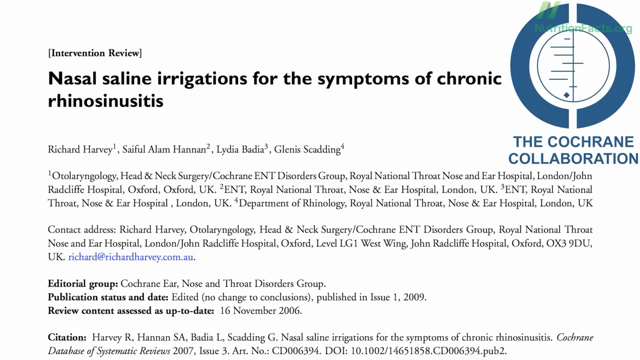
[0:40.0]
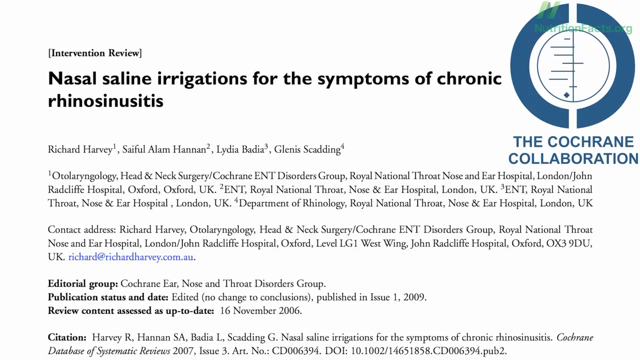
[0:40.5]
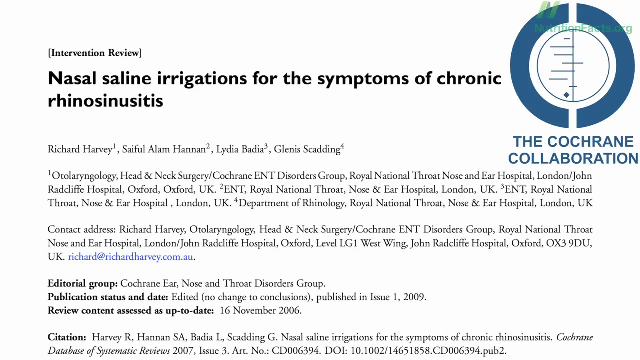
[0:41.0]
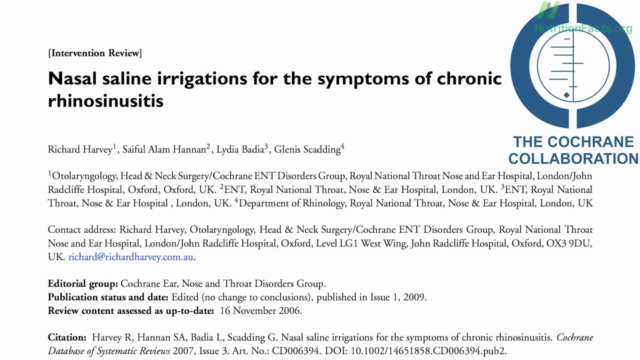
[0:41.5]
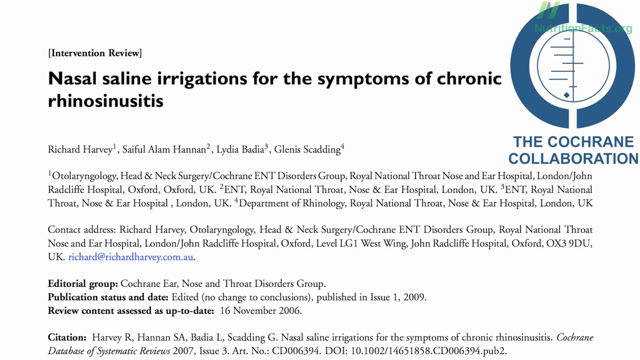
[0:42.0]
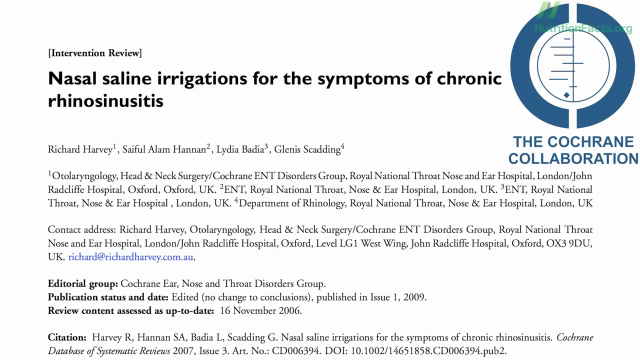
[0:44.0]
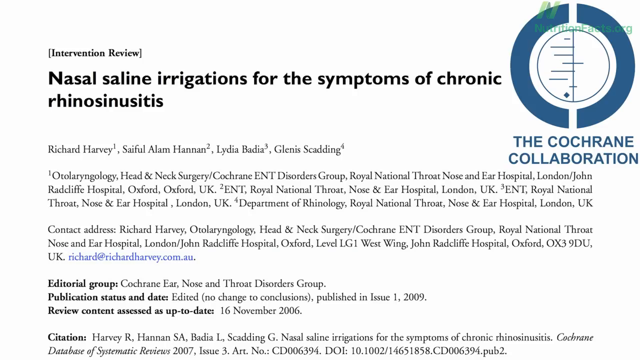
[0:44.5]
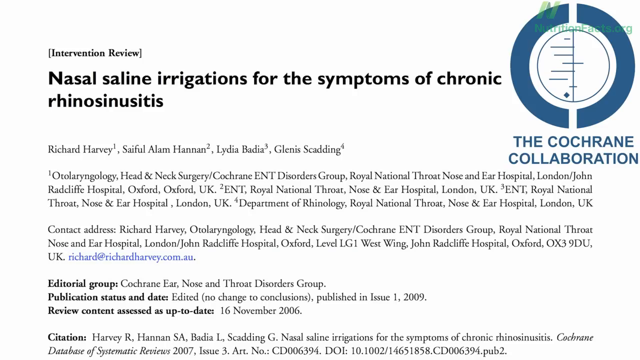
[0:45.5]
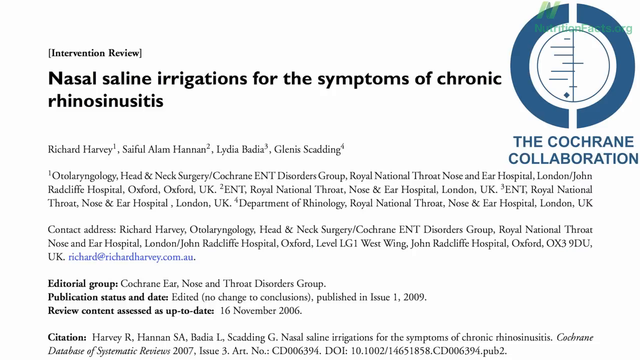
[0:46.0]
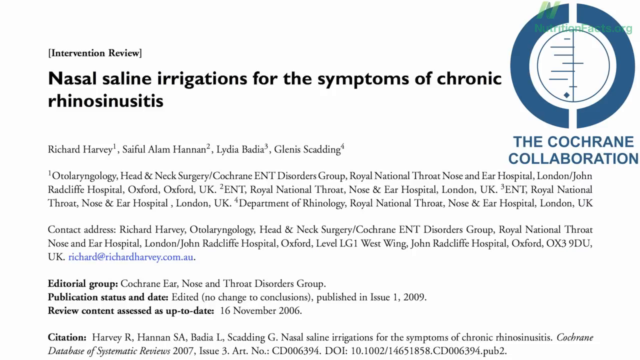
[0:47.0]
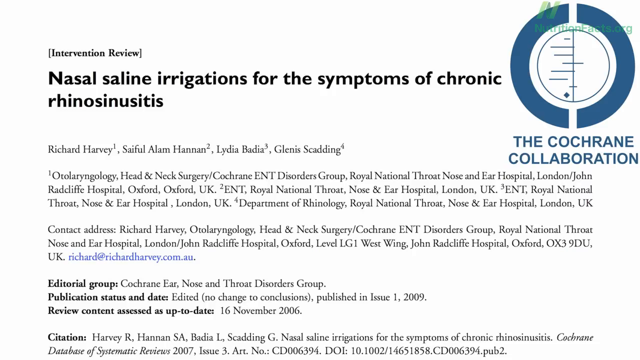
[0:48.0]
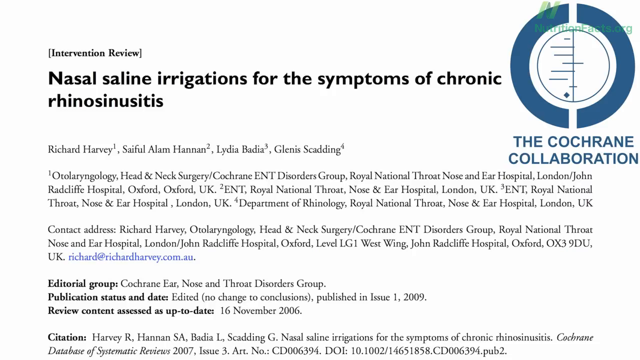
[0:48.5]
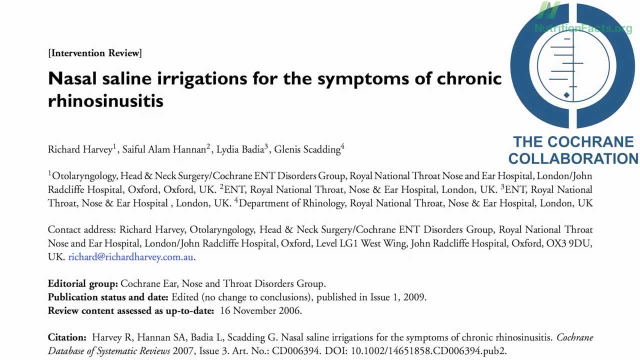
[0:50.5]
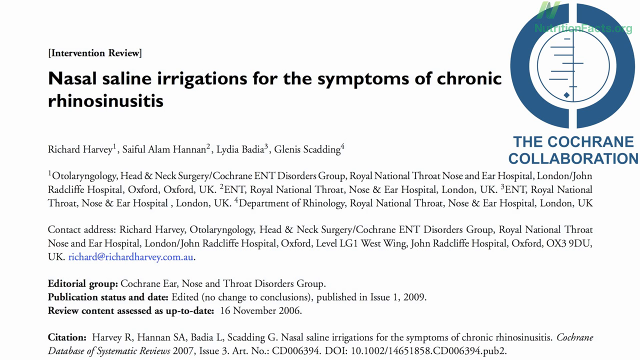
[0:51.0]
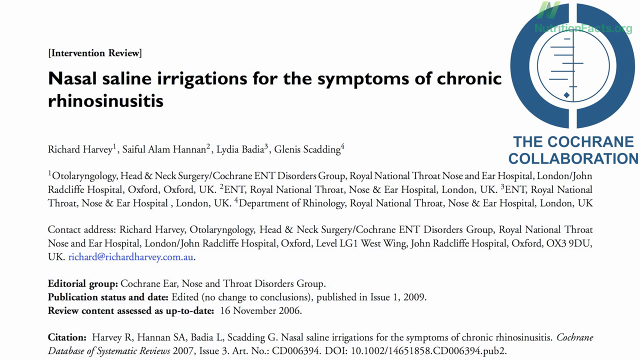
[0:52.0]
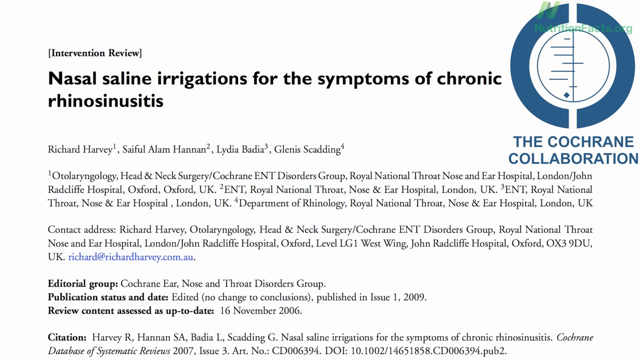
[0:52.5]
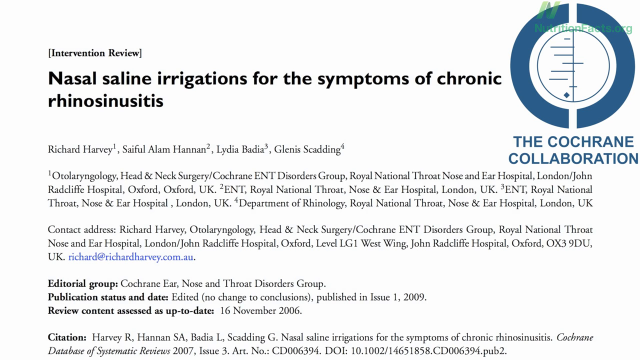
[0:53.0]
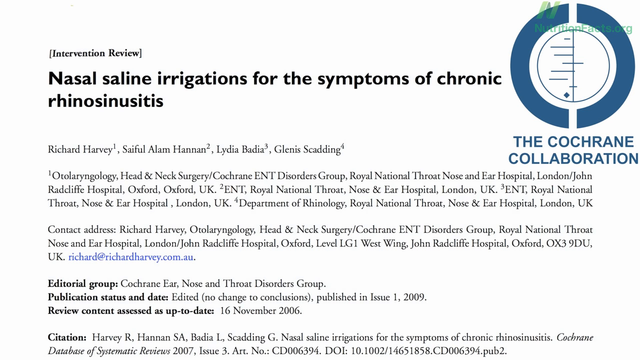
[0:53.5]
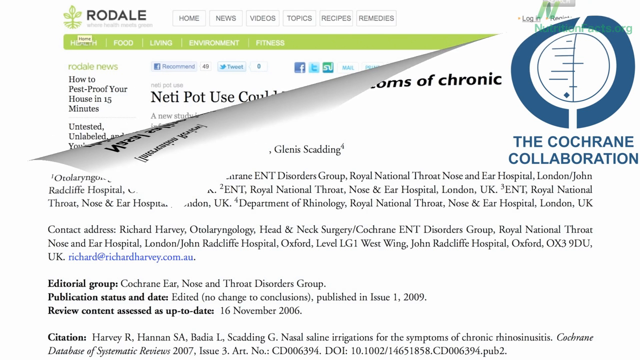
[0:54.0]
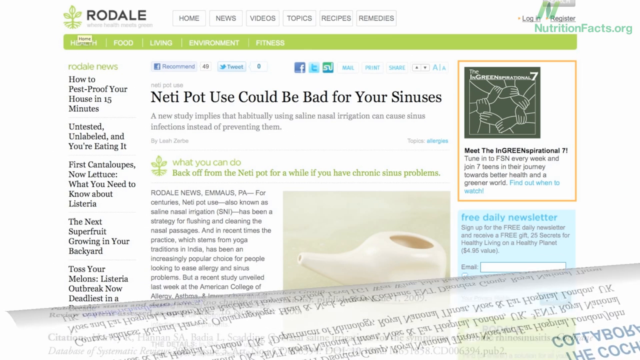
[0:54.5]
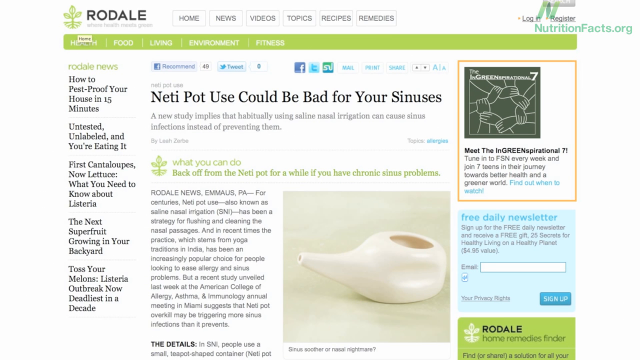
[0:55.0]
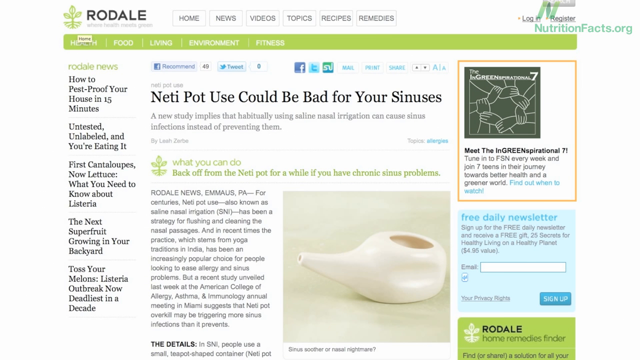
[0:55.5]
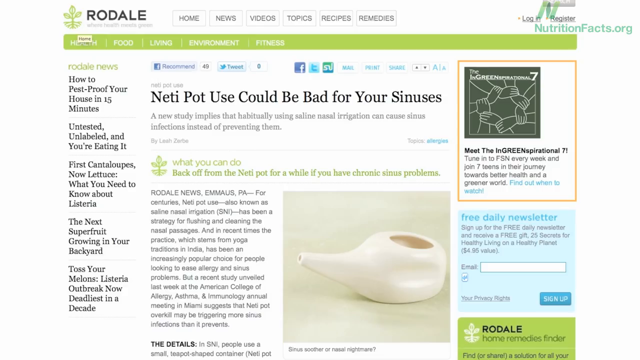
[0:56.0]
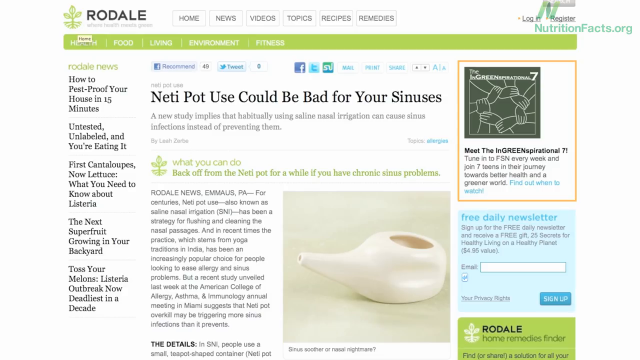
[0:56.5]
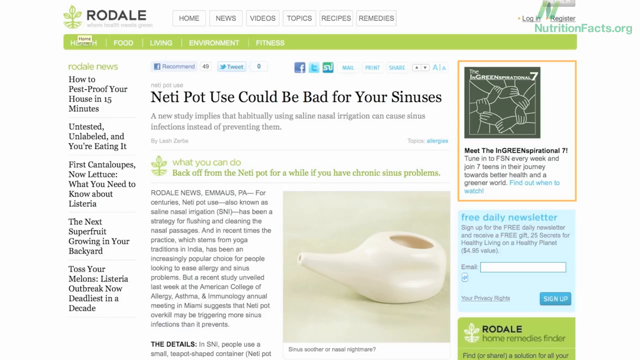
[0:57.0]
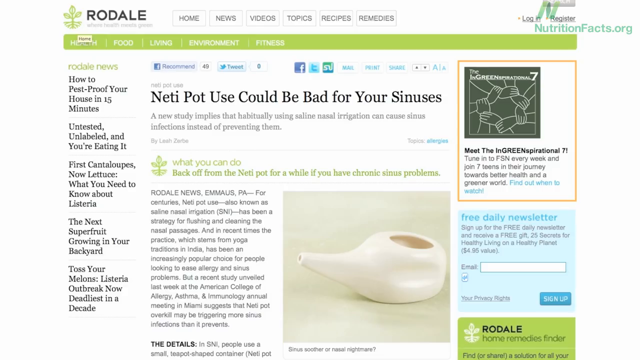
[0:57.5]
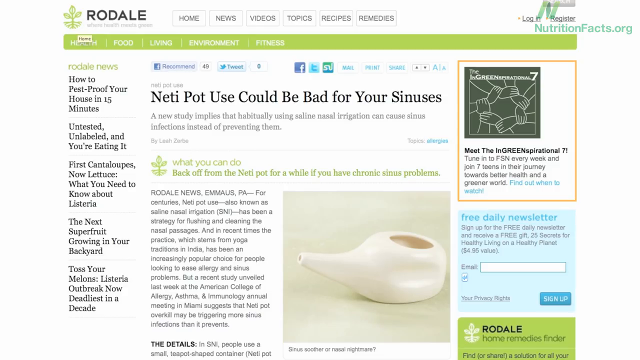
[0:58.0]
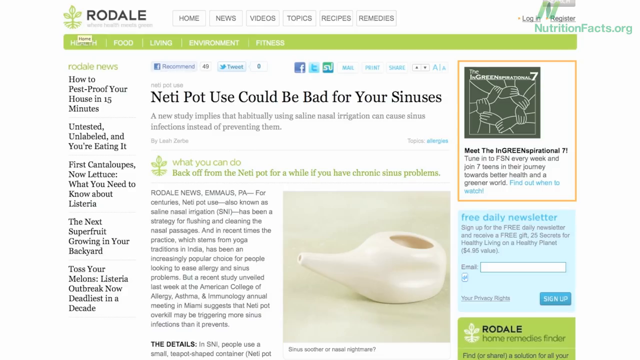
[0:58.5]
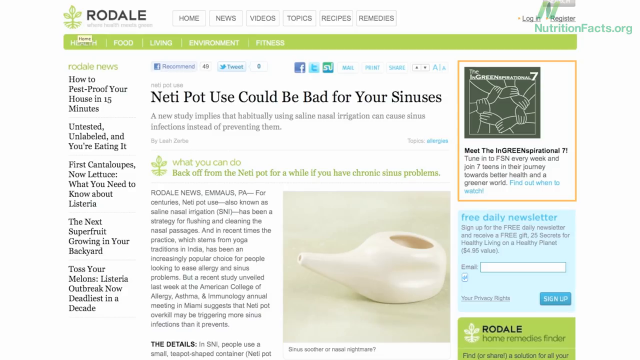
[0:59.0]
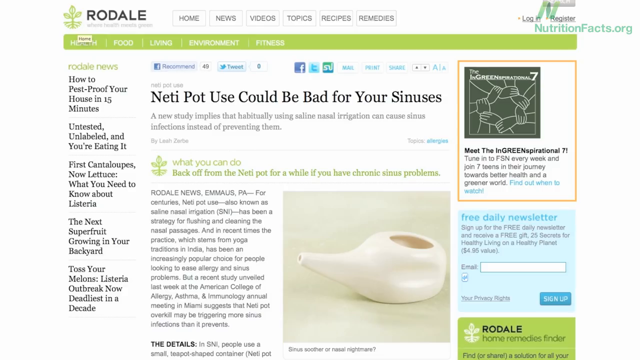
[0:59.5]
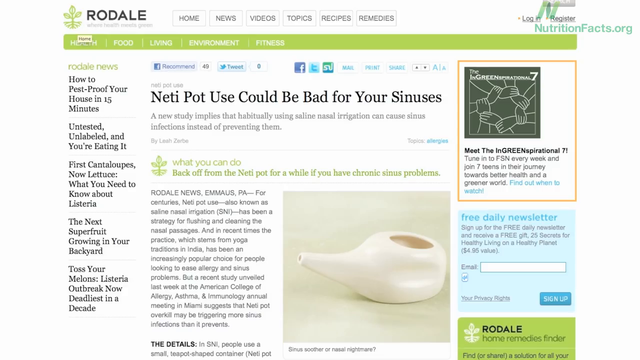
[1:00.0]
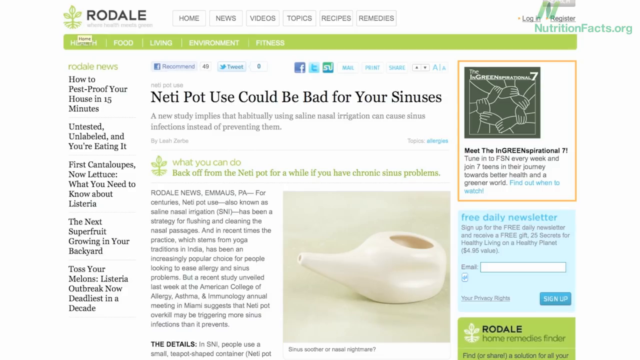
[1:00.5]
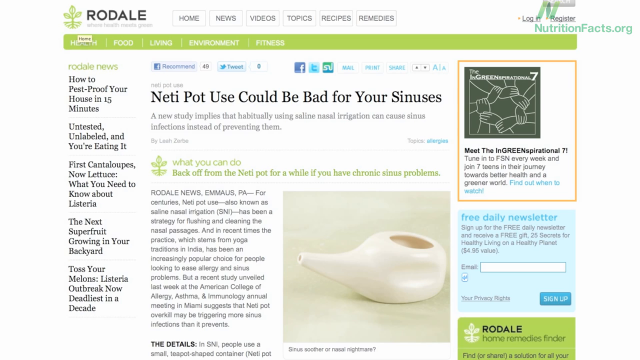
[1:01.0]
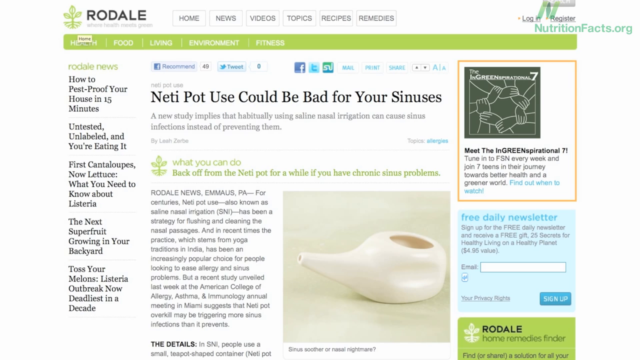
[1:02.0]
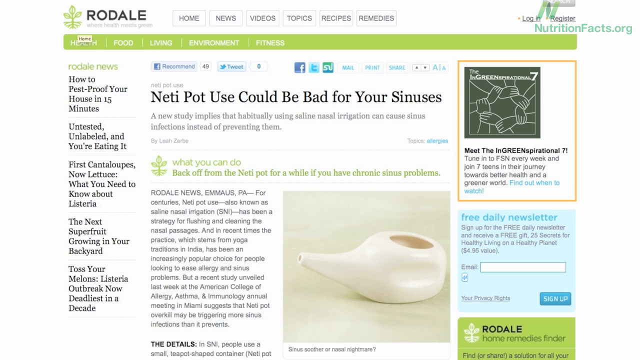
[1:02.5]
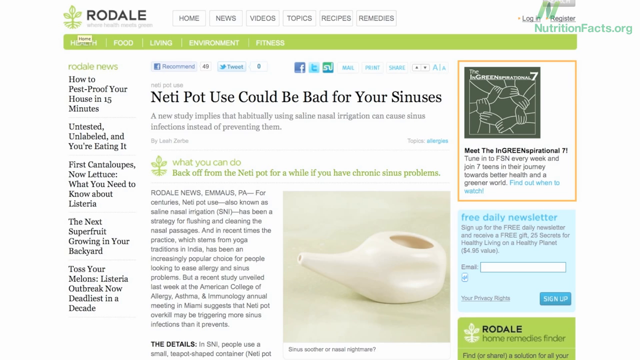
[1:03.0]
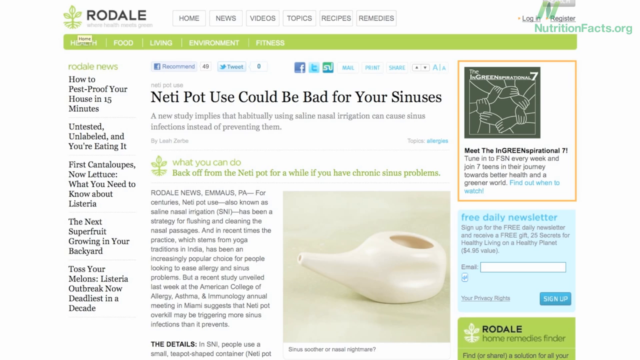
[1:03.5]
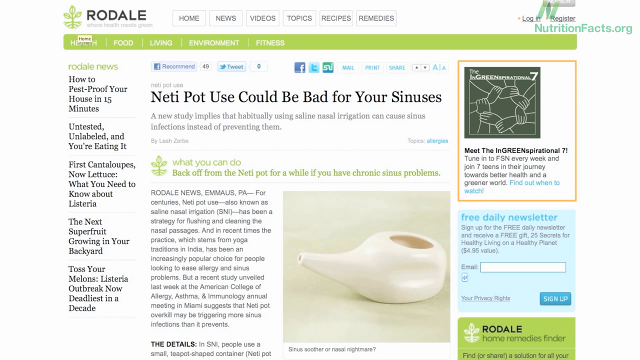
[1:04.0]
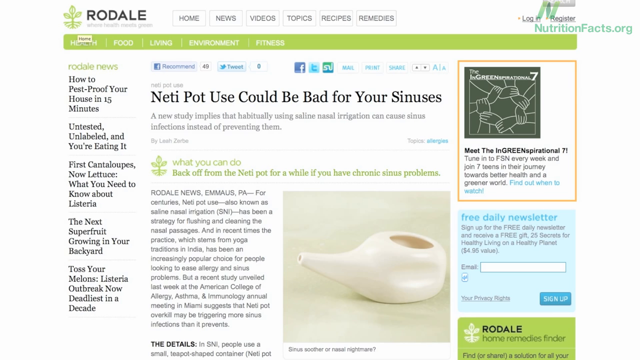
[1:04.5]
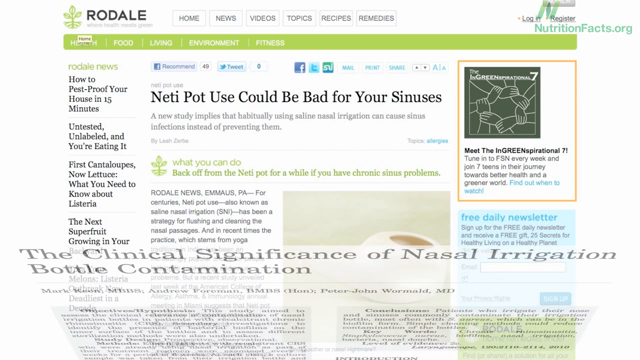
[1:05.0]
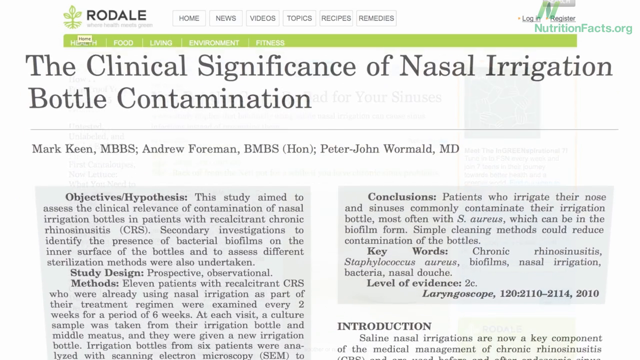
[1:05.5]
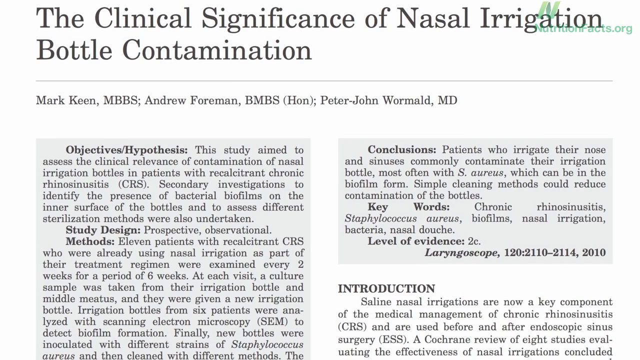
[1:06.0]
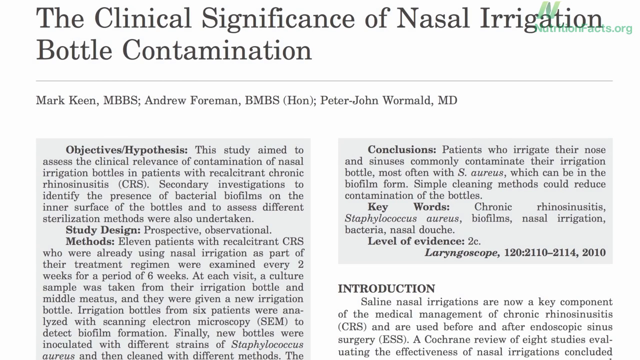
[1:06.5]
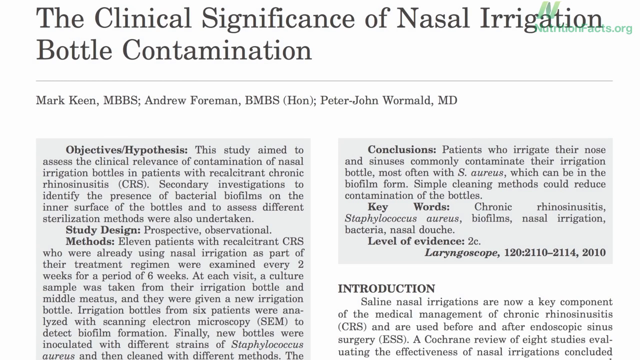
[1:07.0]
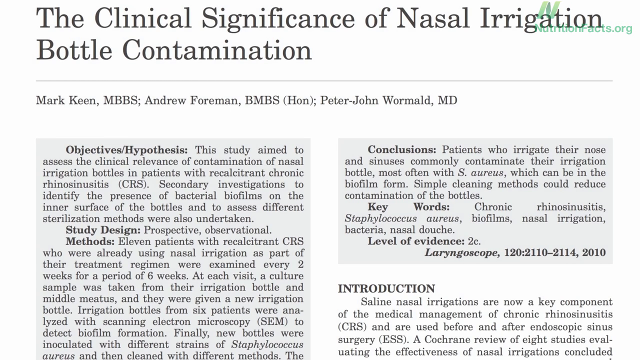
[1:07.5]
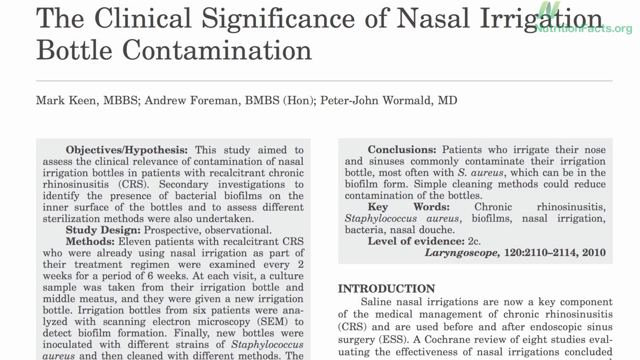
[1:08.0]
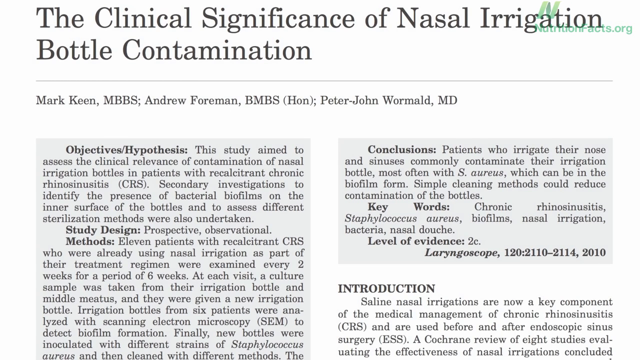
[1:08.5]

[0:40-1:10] A document titled "Nasal Saline Irrigation for the Symptoms of Chronic Rhinosinusitis" is shown, with the Cochrane Collaboration logo in dark blue-green in the left corner. The document stays on screen for 10 seconds, then moves off, appearing to peel down from the upper left corner toward the bottom. Behind it is an image of a web page with the Rodale logo in the upper right and bright green navigation bars. In the center is an article titled "Neti Pot Use Could be Bad for Your Sinuses", written in black font. The paragraph is on one side, and the right side has an image of a white neti pot on a white background, in two different whites. After several seconds, a different document, all in black and white, slides up from the bottom; its title is "the Clinical Significance of Nasal Irrigation Bottle Contamination".